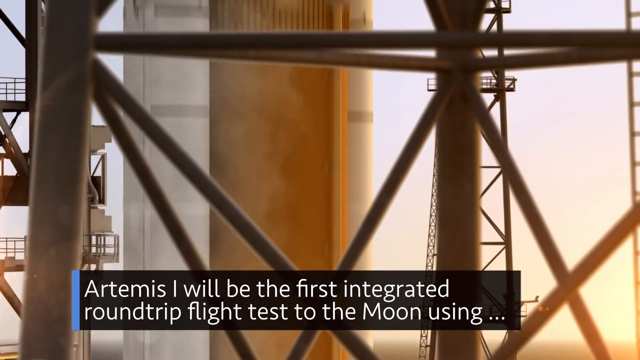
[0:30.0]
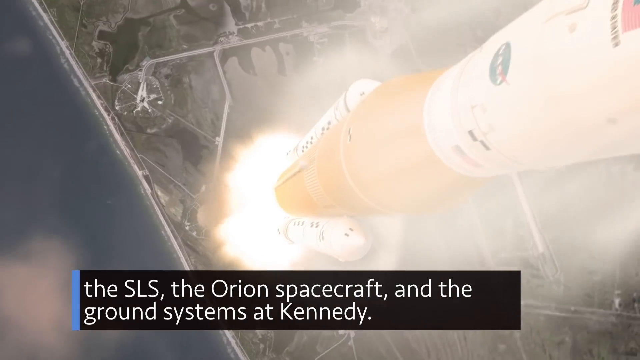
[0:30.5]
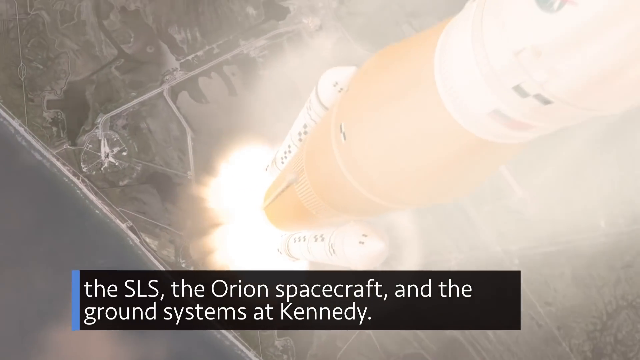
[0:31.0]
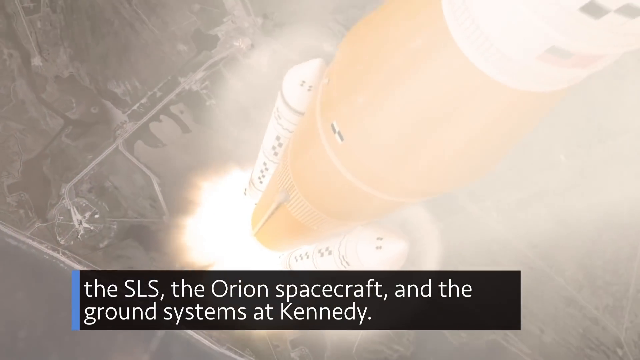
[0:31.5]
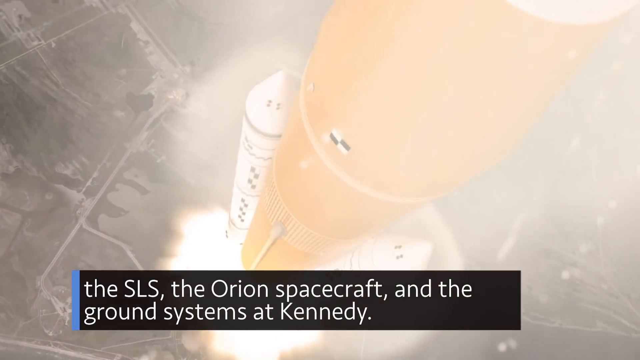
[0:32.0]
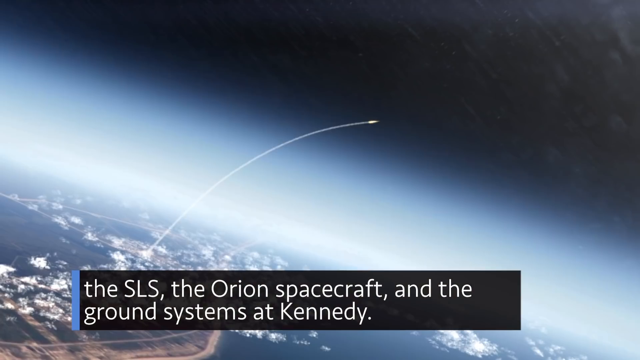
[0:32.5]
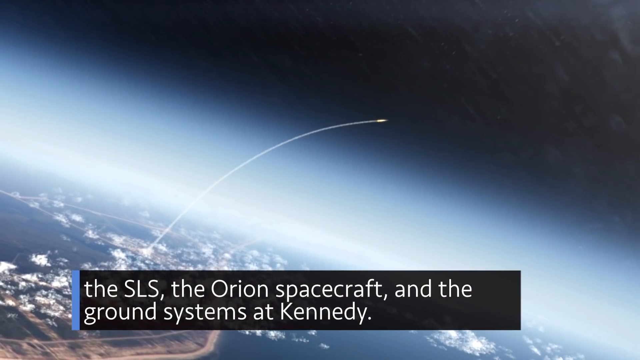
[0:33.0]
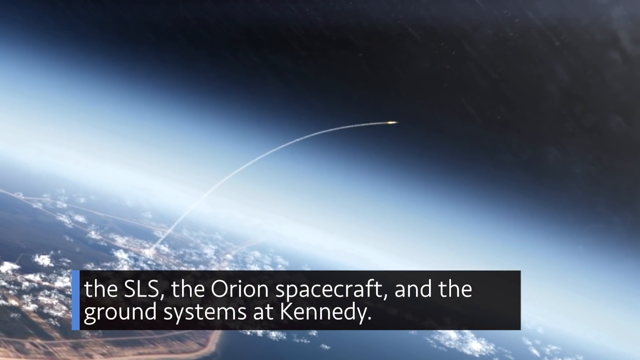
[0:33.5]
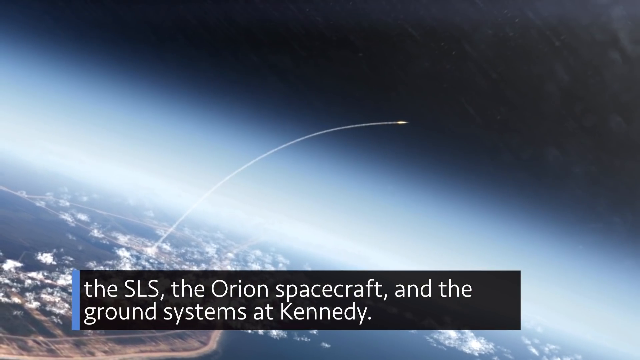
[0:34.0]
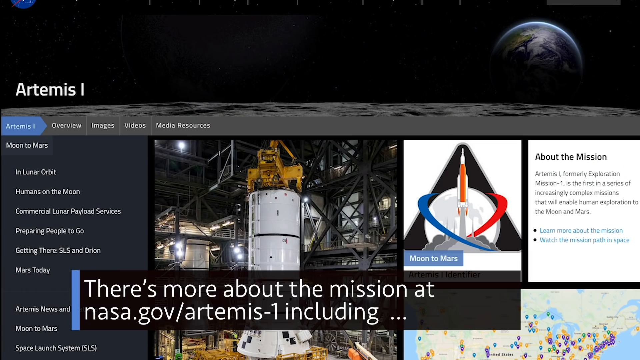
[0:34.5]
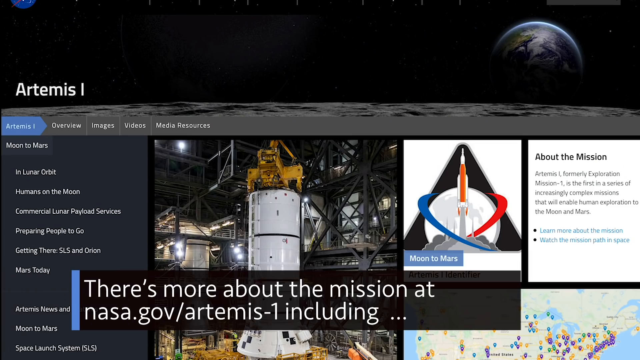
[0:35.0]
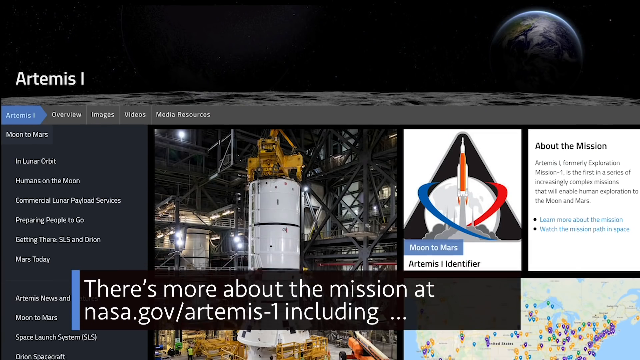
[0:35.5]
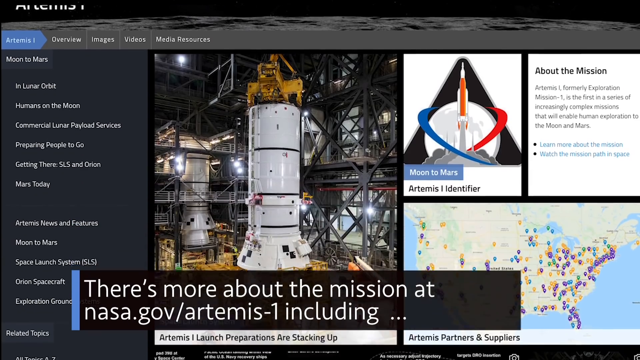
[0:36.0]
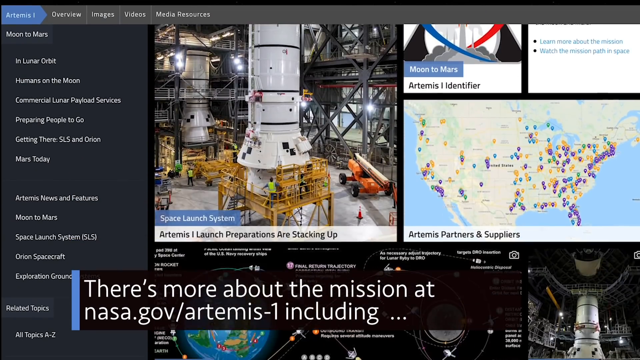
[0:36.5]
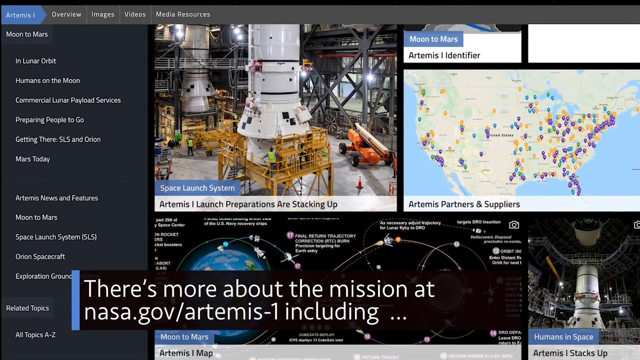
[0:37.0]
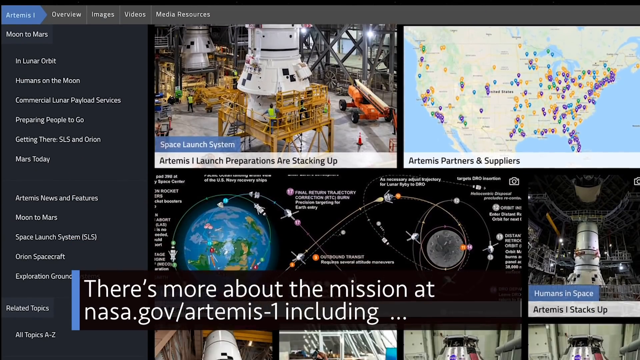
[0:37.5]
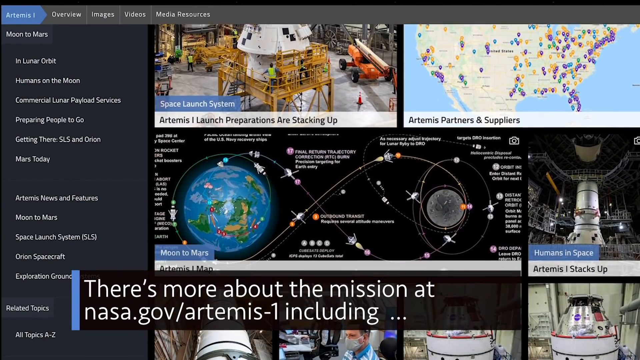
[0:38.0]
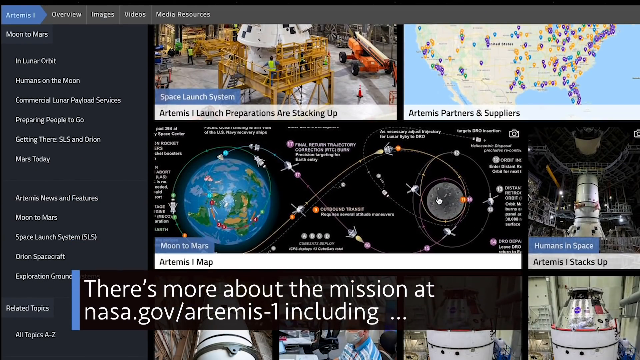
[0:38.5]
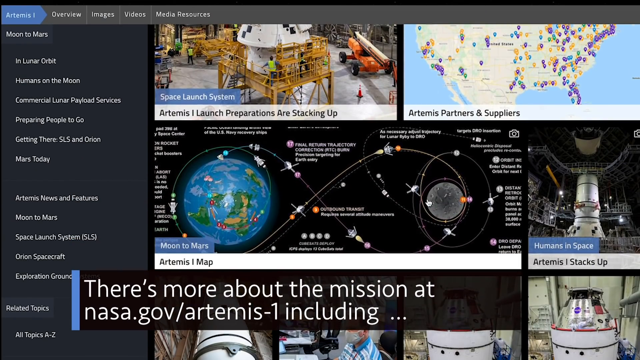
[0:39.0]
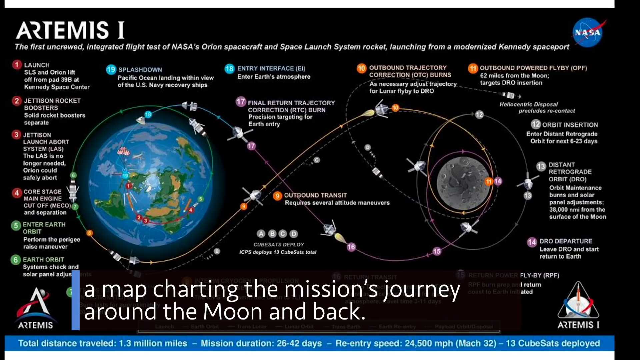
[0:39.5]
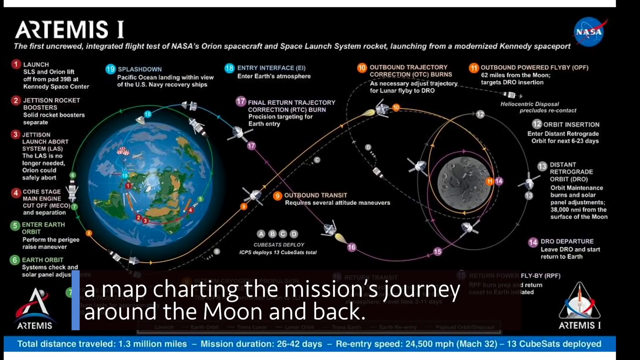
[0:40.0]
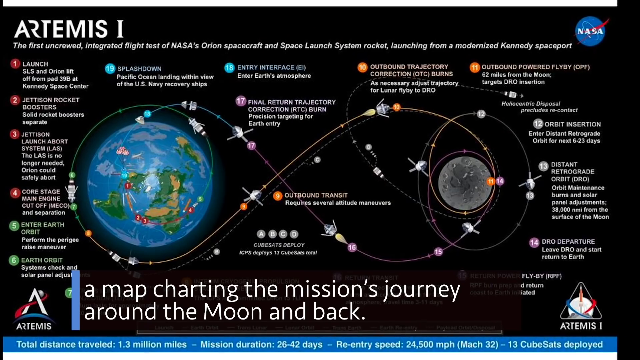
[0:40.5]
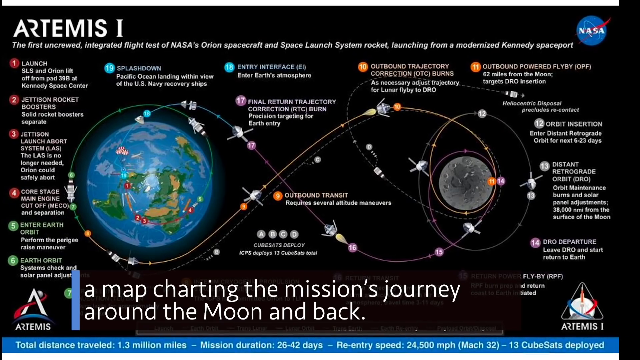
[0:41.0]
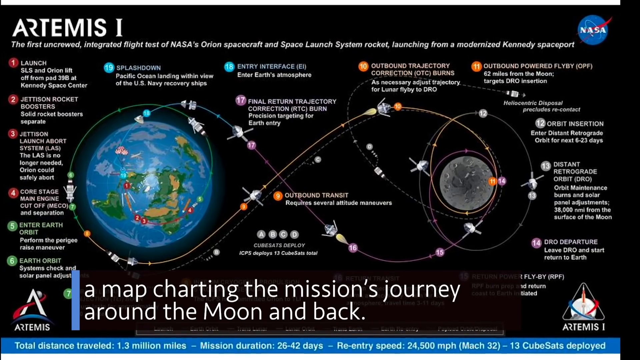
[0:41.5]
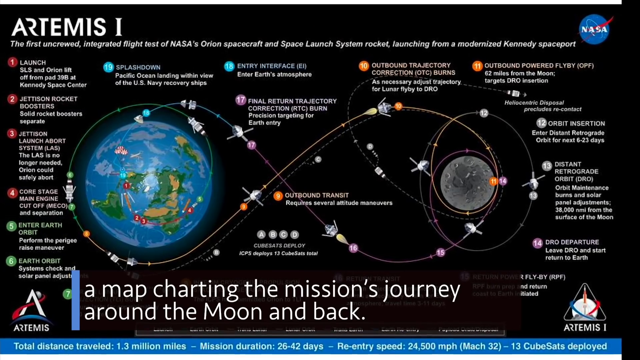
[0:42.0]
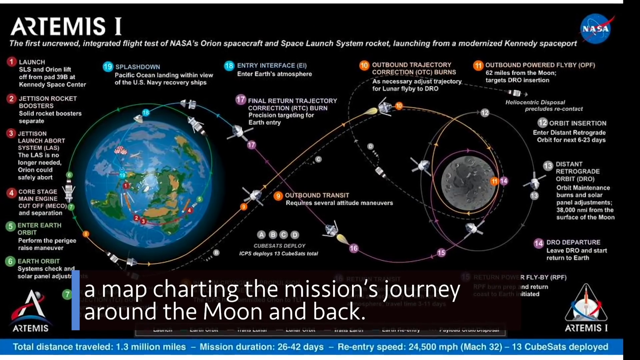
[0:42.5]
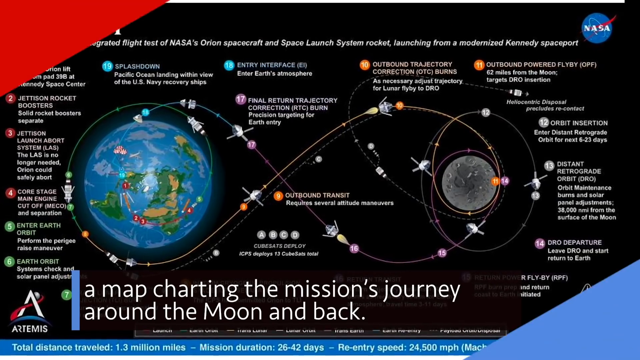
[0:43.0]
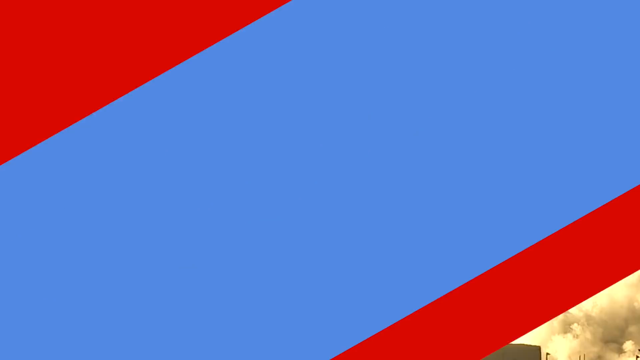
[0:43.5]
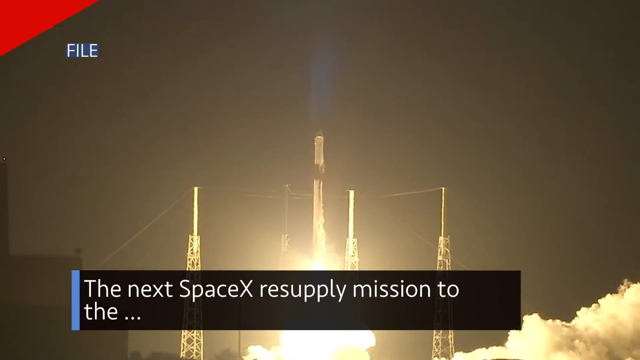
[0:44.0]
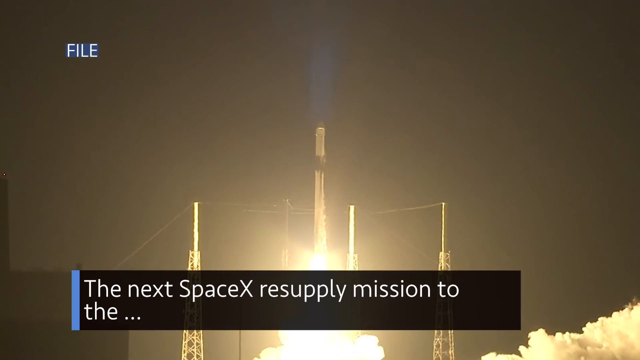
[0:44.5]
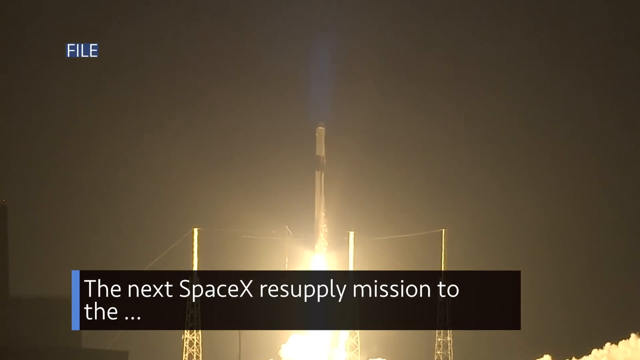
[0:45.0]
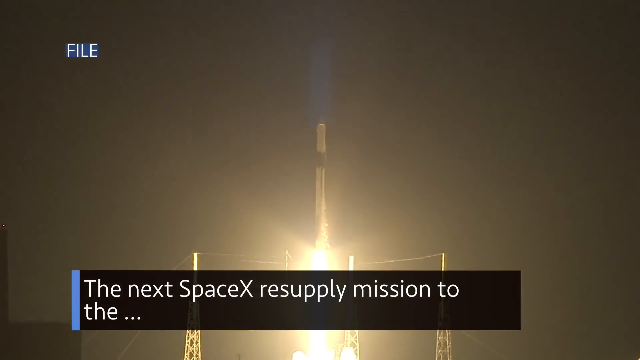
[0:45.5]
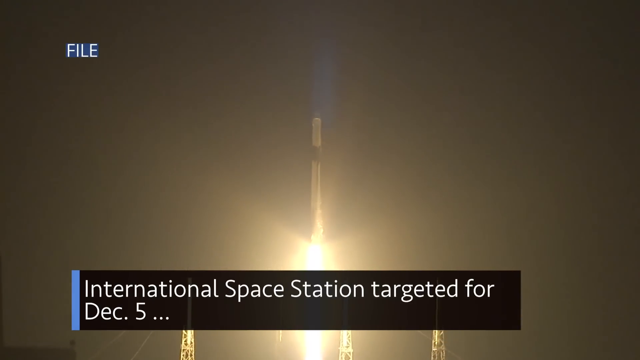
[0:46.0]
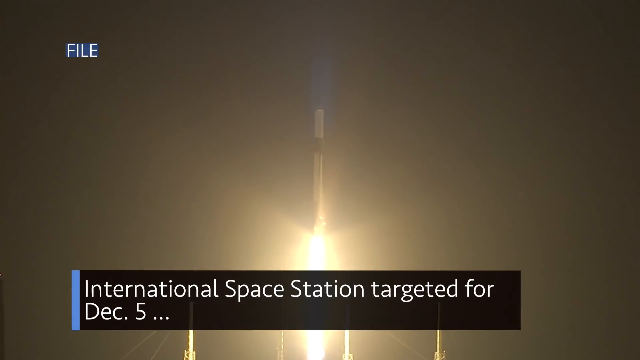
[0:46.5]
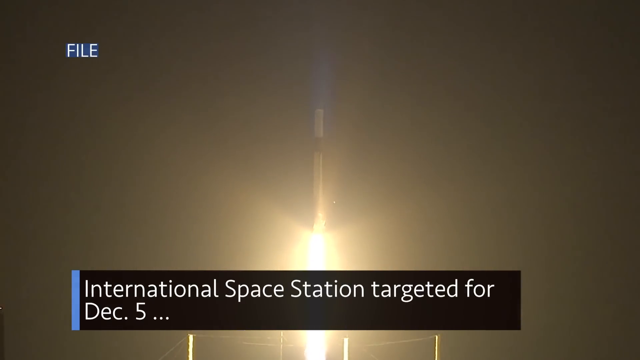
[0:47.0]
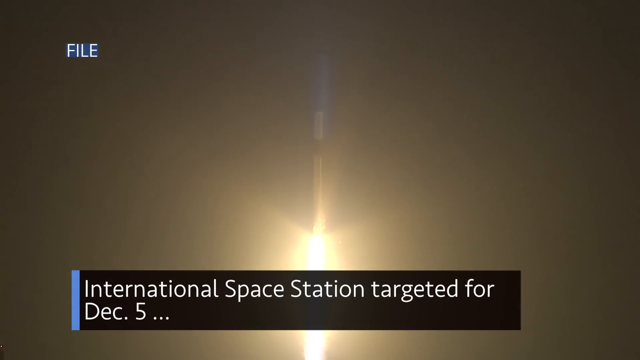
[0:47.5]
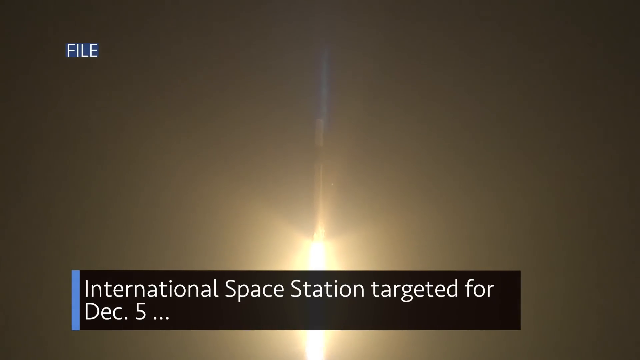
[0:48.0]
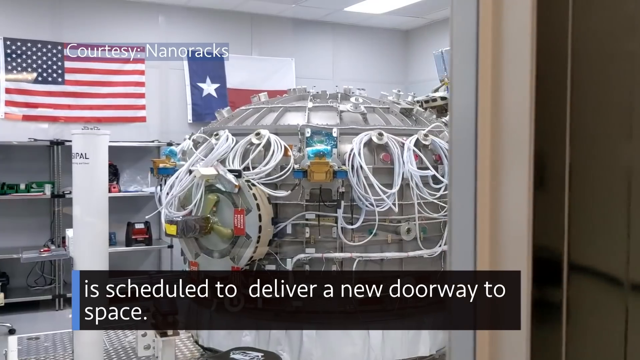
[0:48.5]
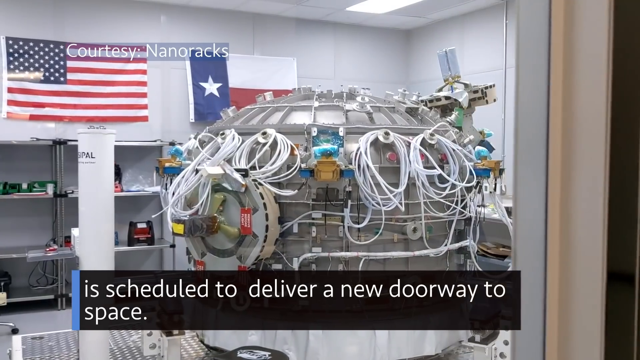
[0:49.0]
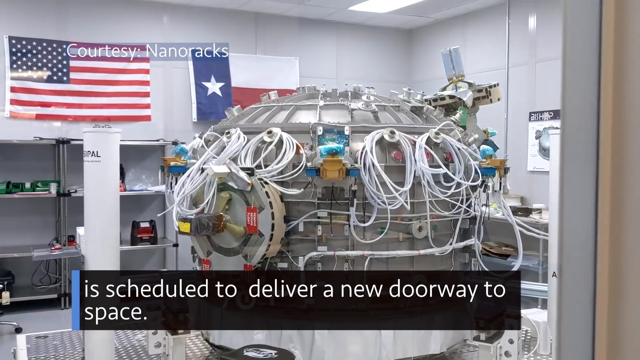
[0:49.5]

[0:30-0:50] The rocket shoots up, and the next picture shows it arcing across the sky, leaving a trail. A website is shown, scrolling up to a map of the route around the moon, and then a close-up of part of that map. A blue and red box moves across the screen, a rocket shoots off again, and then a piece of equipment is shown.